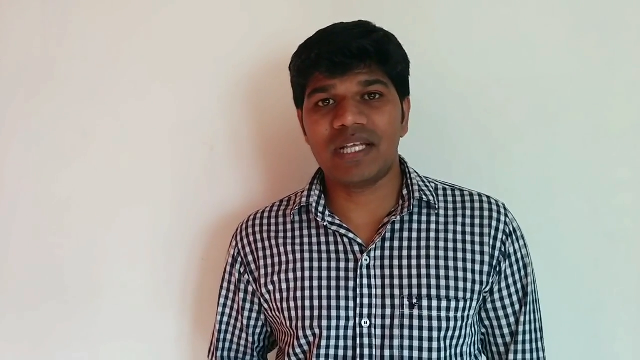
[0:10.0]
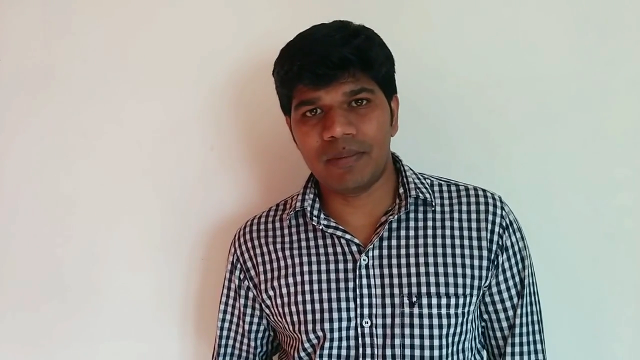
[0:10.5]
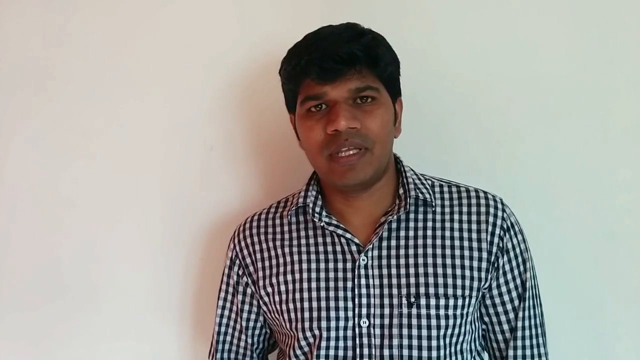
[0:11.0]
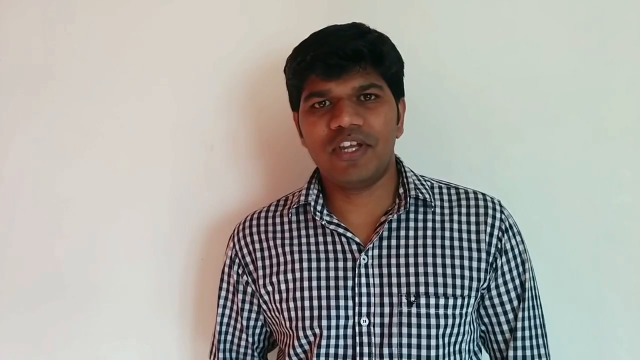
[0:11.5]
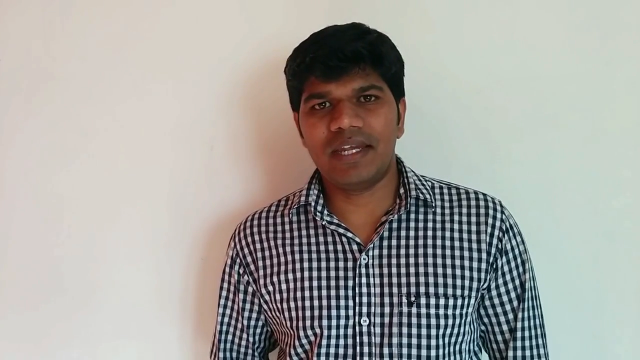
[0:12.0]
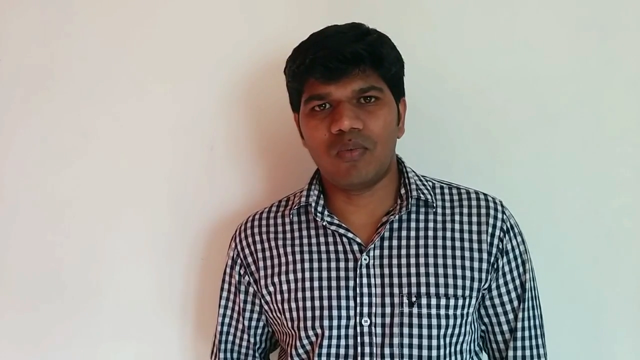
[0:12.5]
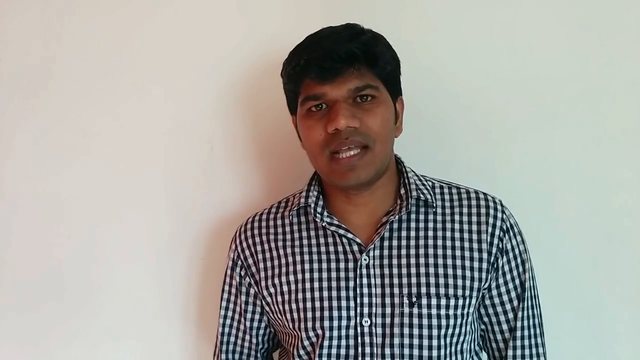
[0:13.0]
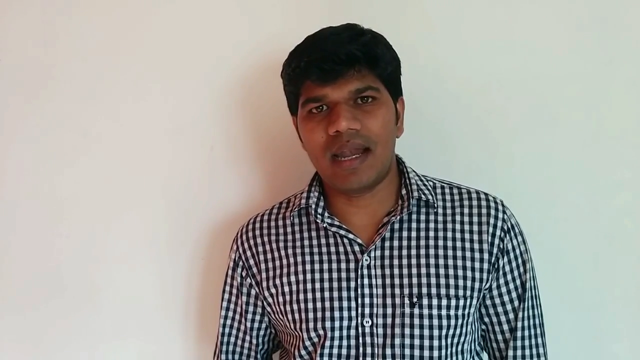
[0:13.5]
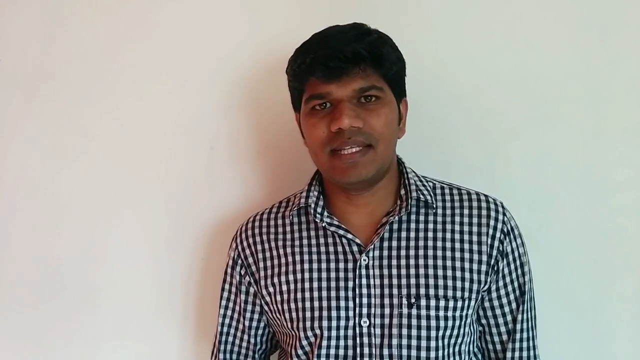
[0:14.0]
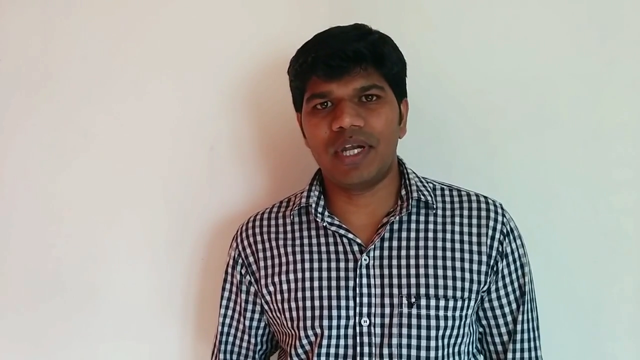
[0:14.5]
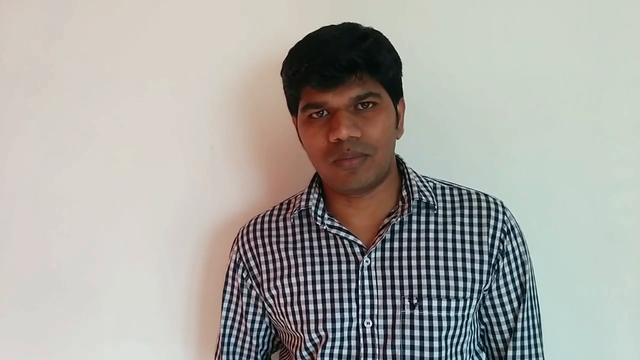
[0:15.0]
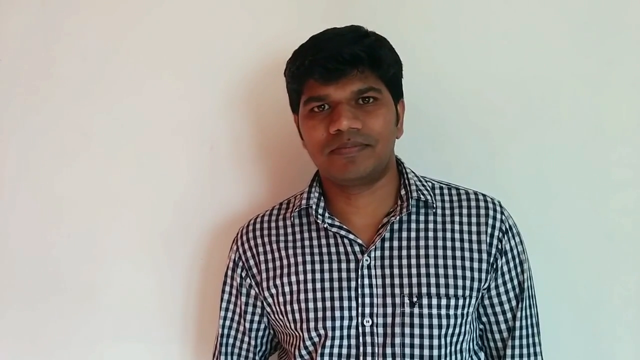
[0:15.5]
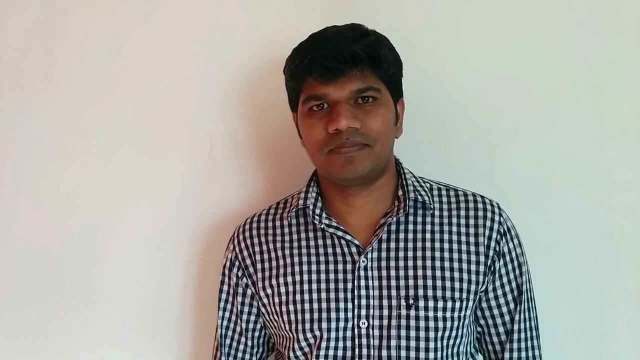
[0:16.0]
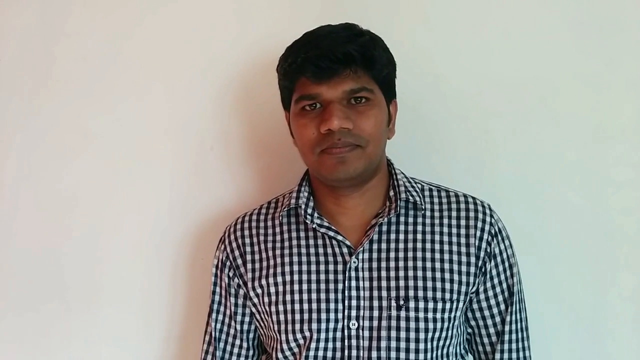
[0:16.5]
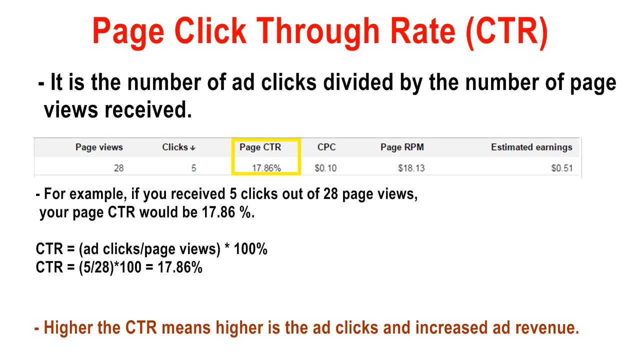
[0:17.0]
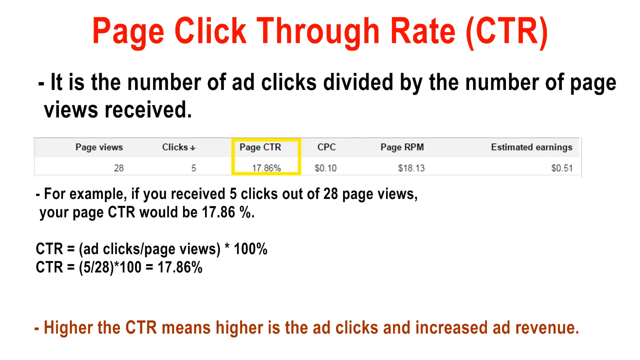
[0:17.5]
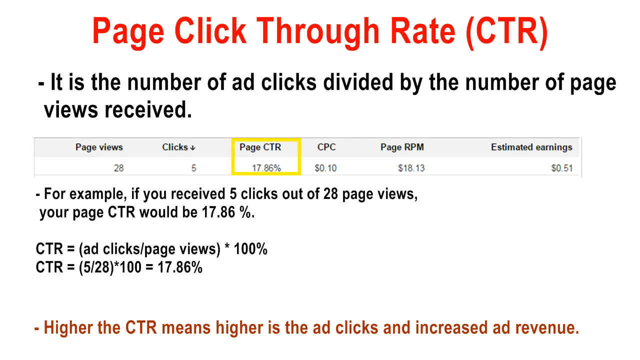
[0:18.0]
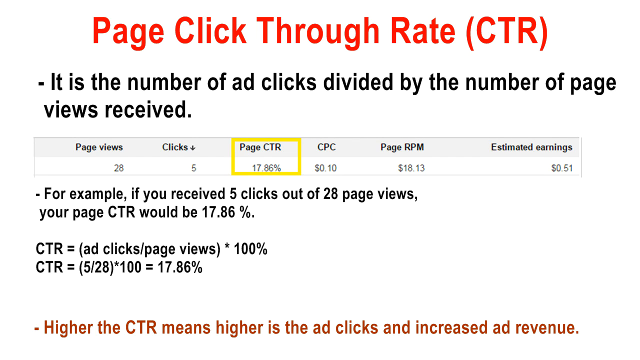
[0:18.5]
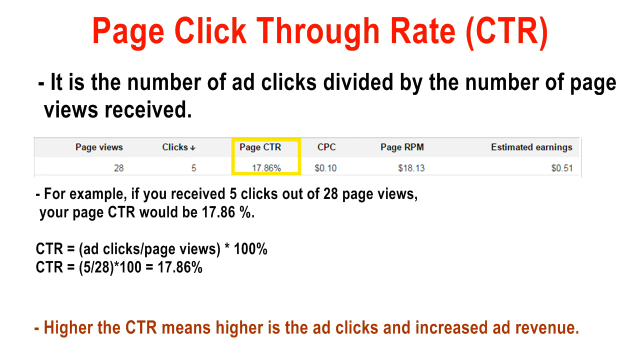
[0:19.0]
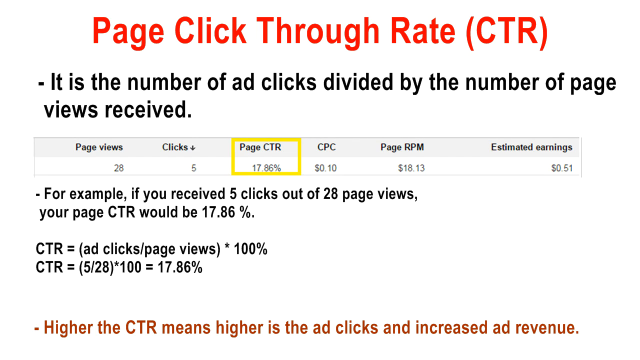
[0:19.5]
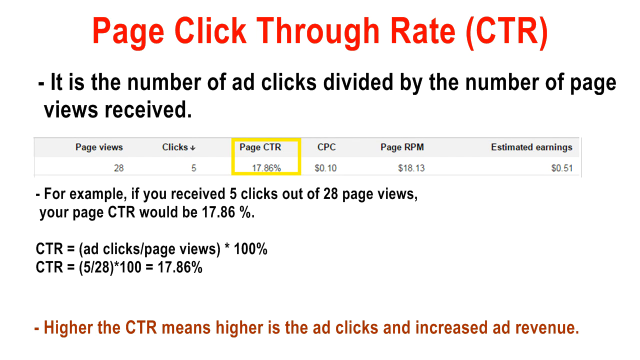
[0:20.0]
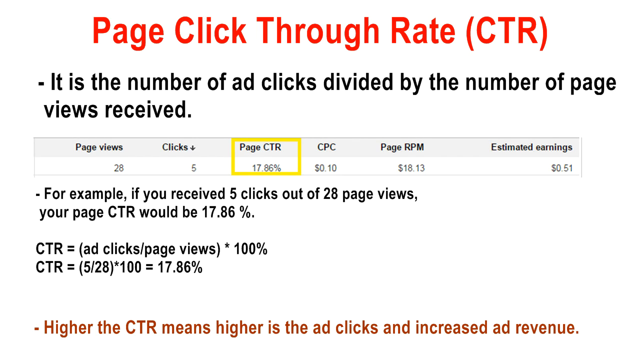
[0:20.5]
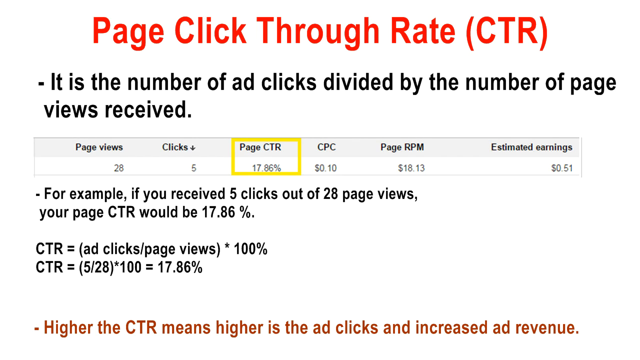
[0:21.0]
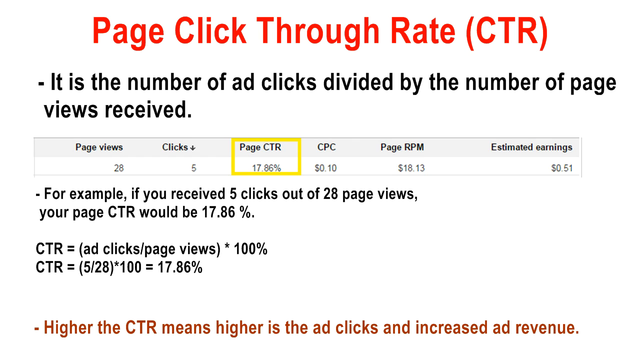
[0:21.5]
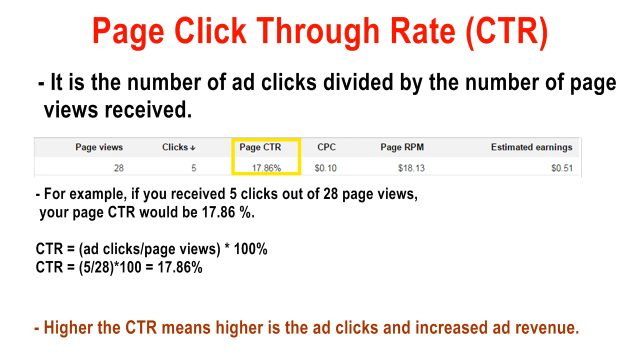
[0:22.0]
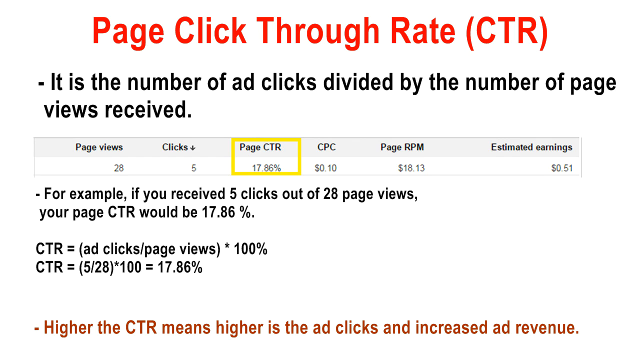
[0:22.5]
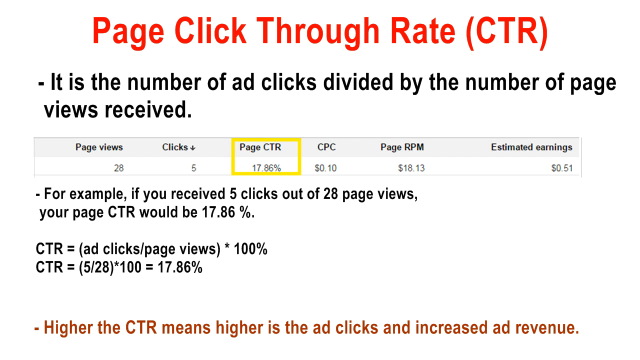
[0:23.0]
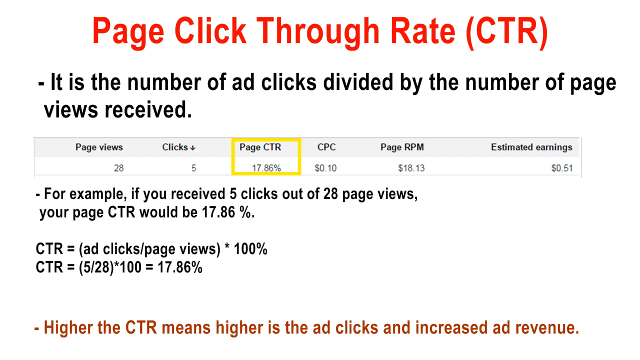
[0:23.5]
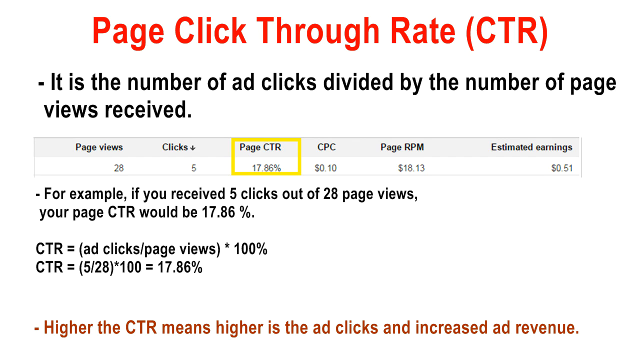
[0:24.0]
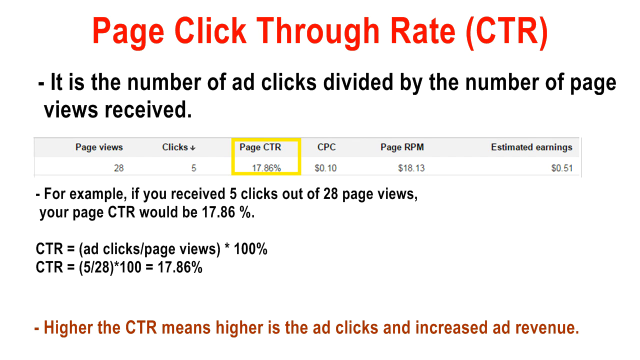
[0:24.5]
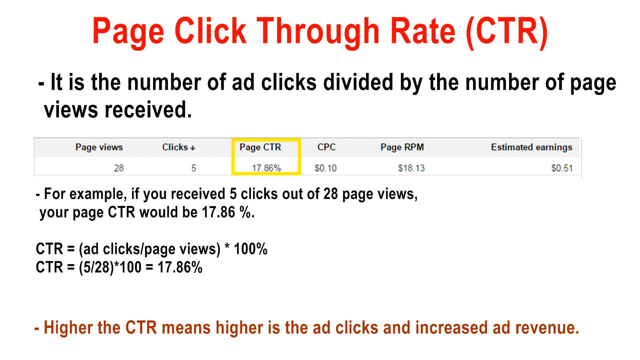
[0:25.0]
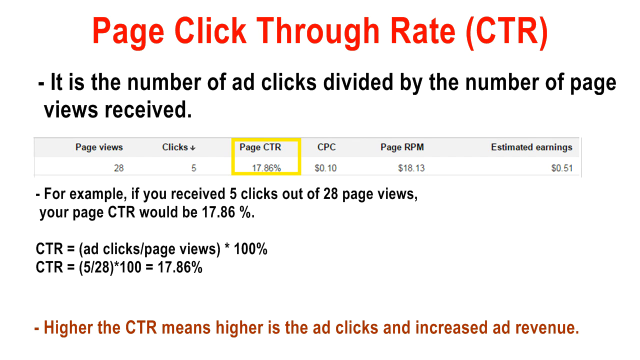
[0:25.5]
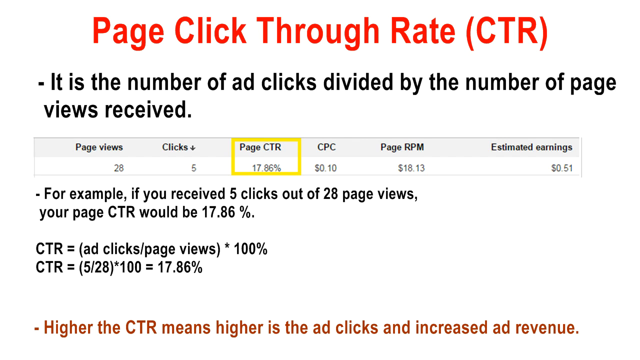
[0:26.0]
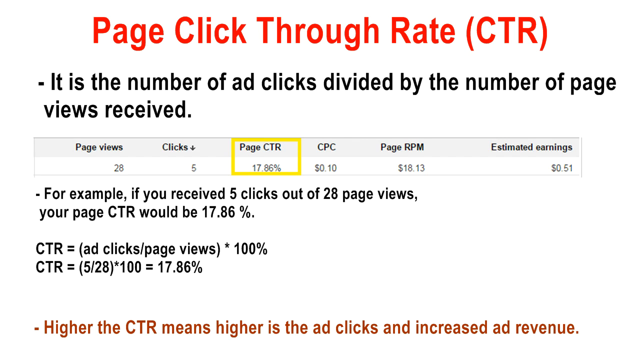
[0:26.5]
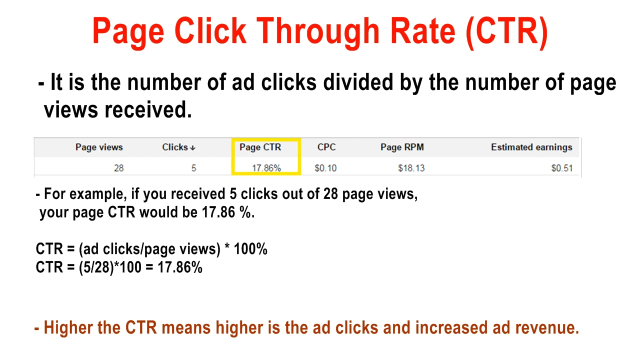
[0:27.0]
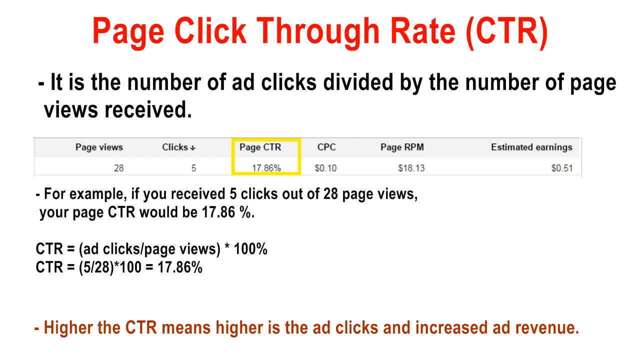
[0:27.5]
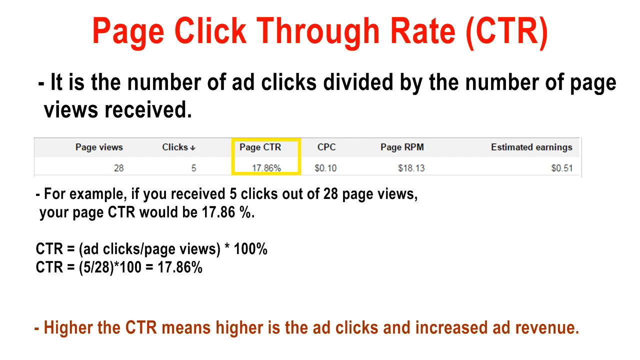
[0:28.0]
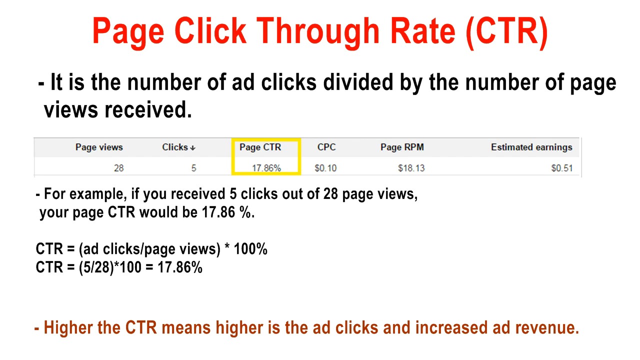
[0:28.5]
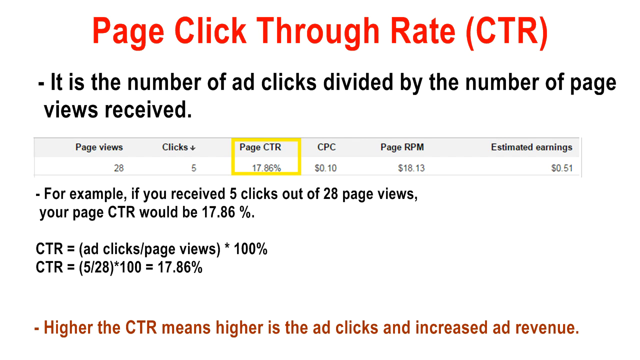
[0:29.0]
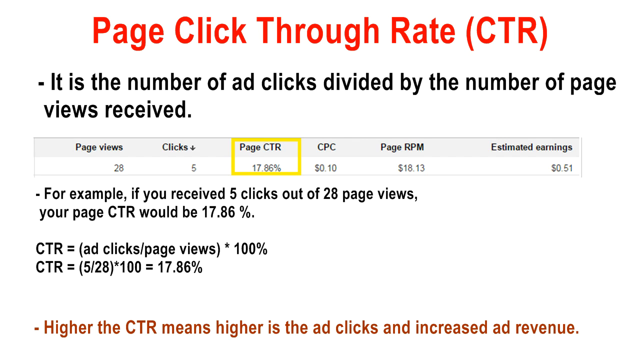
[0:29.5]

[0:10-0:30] The same dark-skinned man with dark hair, in a blue and white checked button-down shirt, stands against a white wall. The video then moves to a screen headed "page click through rate" in red lettering, with the rest of the lettering in black. The text says it is the number of ad clicks divided by the number of page views received, and it gives a page percentage of 17.86 percent. It continues: "for example, if you received five clicks out of 28 page views, your CTR would be 17.86 percent." The screen shows CTR as the ad clicks per page views, with a result of 17.86.